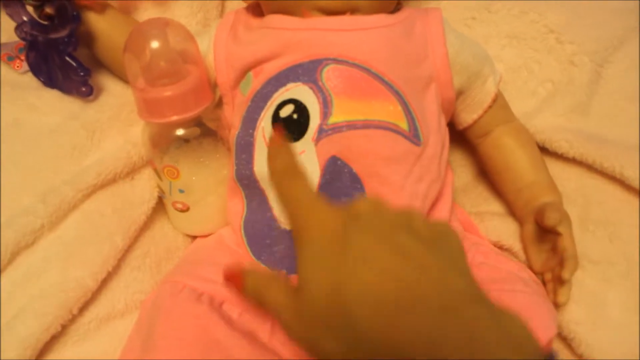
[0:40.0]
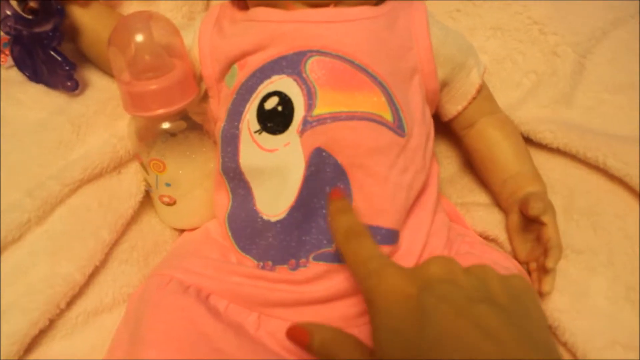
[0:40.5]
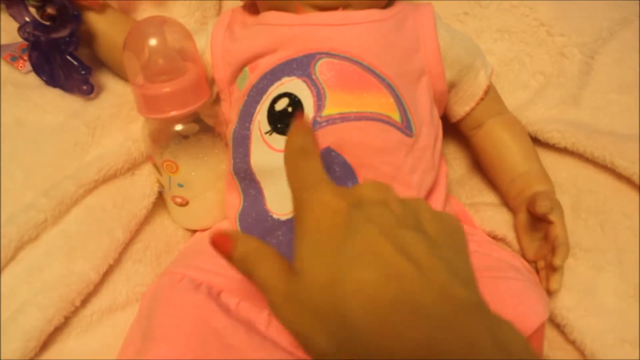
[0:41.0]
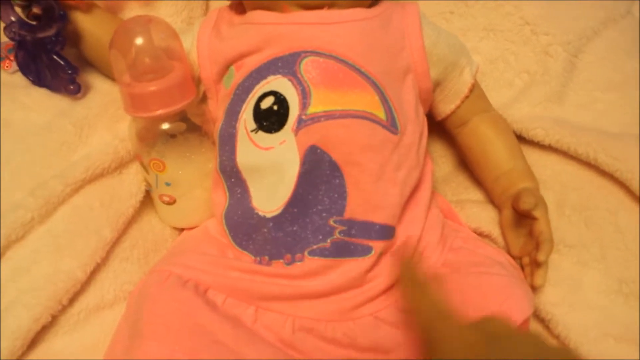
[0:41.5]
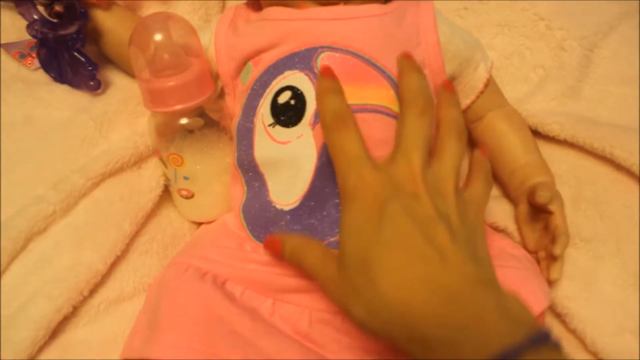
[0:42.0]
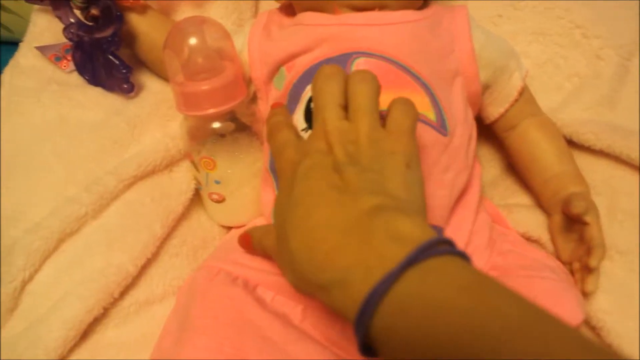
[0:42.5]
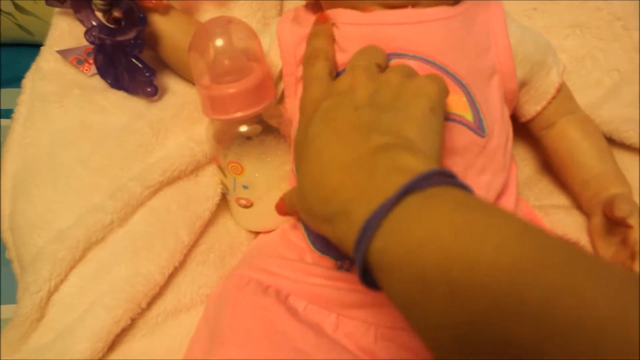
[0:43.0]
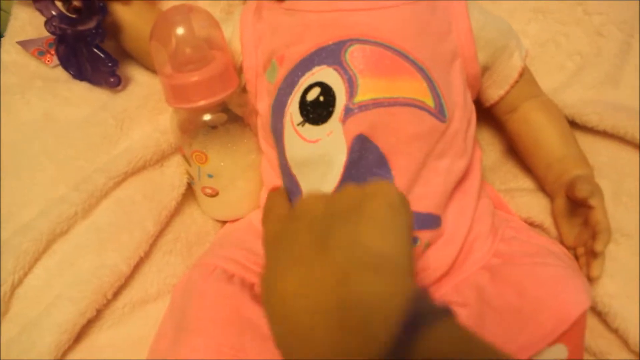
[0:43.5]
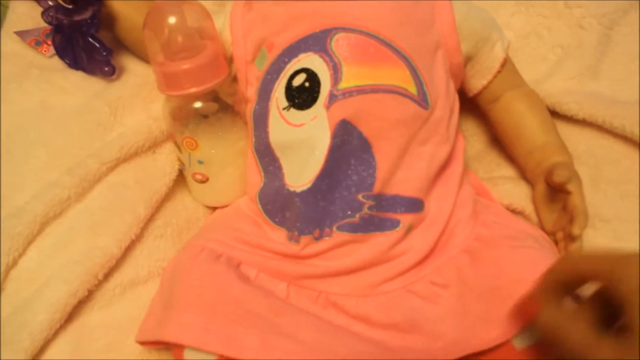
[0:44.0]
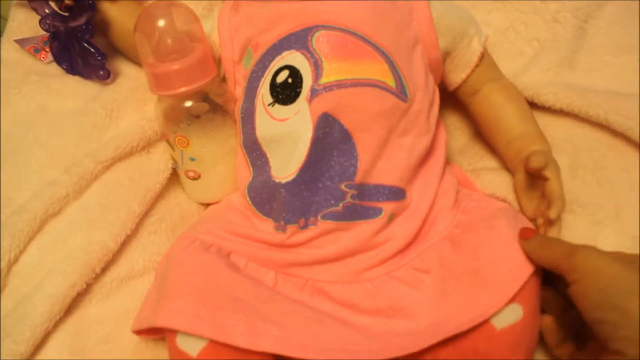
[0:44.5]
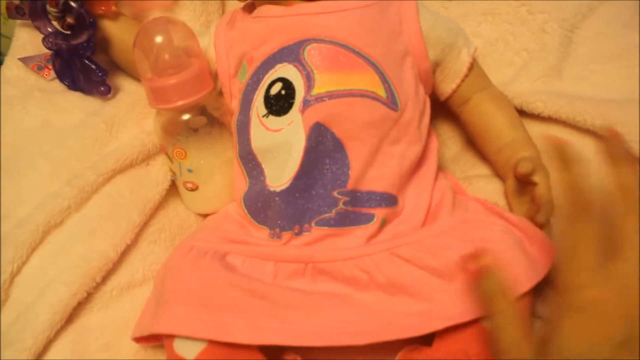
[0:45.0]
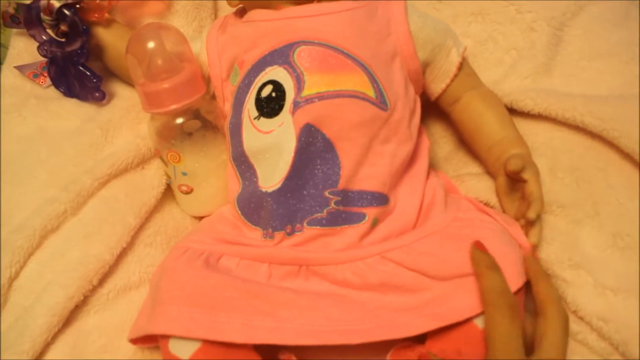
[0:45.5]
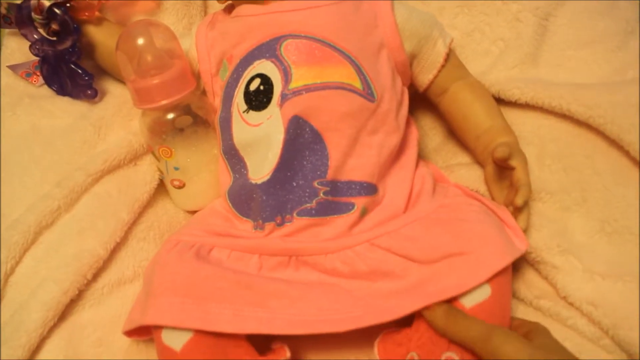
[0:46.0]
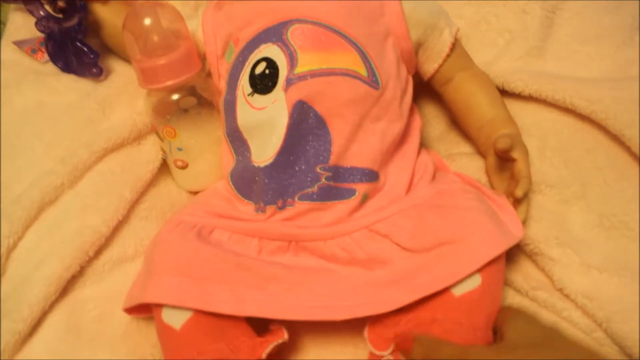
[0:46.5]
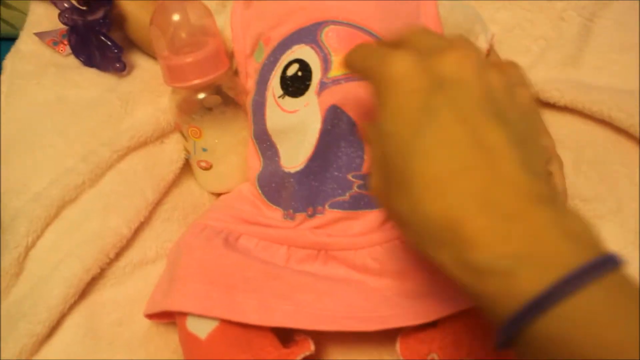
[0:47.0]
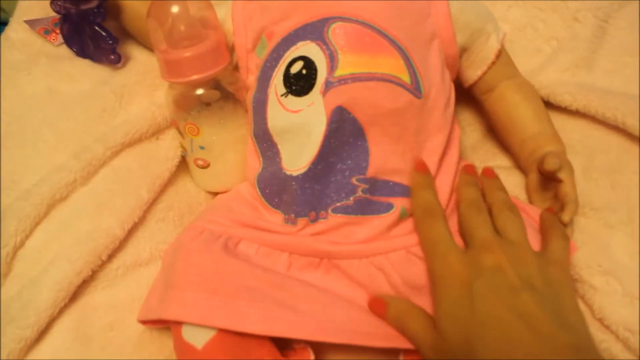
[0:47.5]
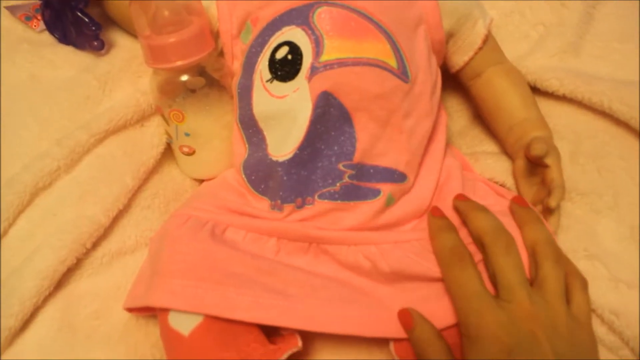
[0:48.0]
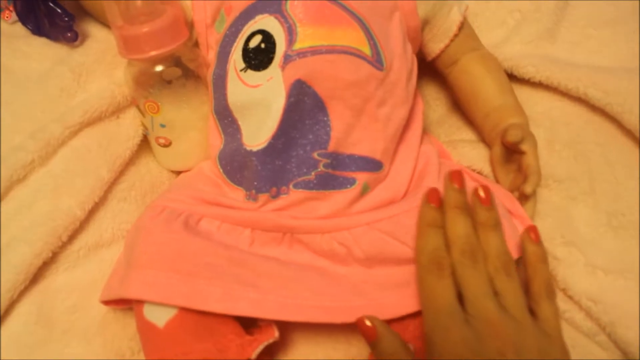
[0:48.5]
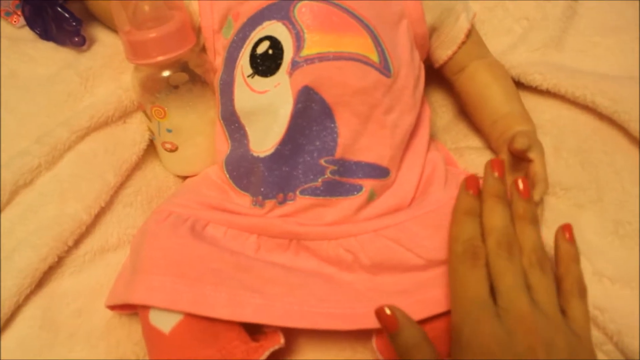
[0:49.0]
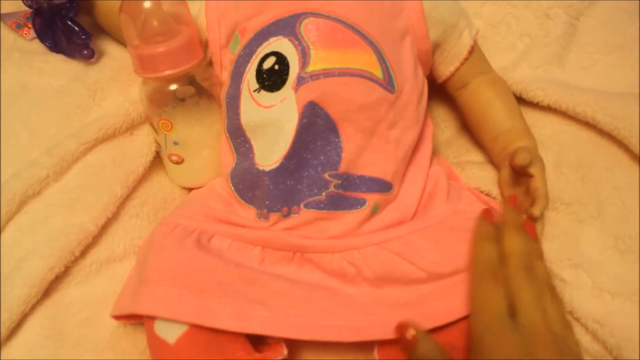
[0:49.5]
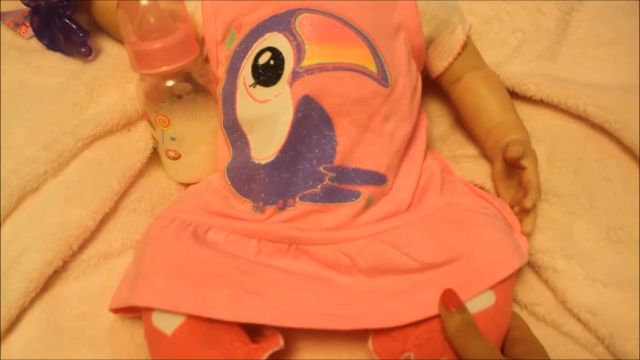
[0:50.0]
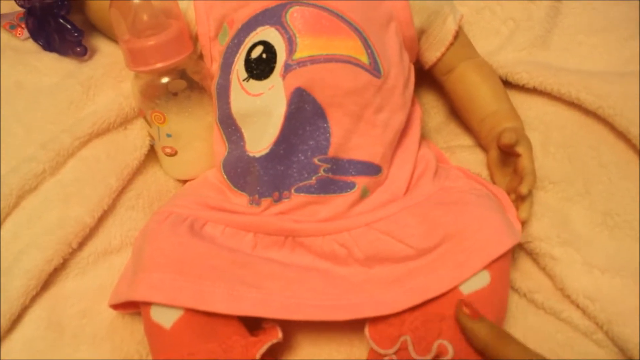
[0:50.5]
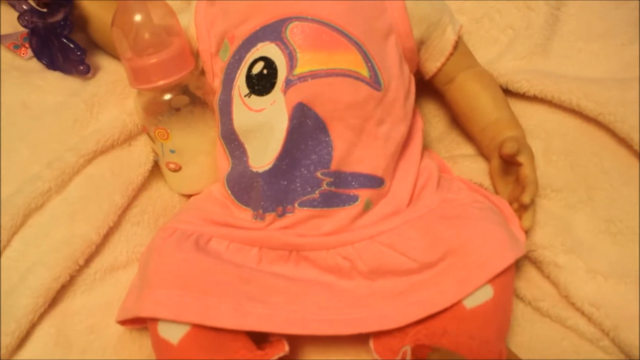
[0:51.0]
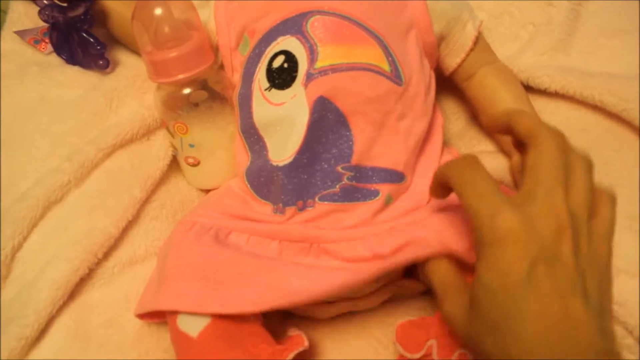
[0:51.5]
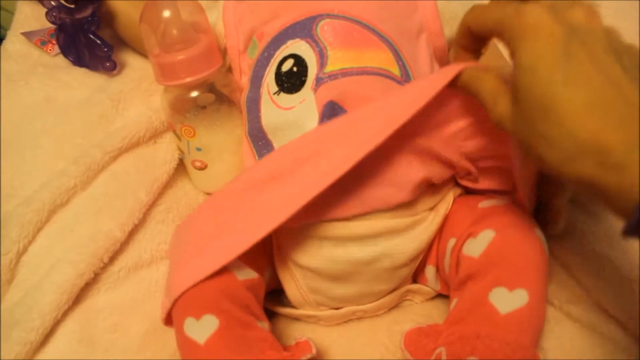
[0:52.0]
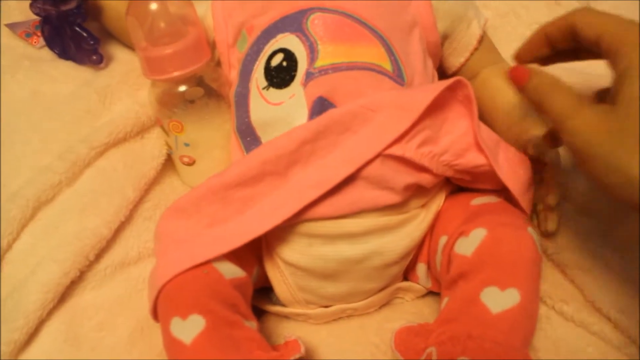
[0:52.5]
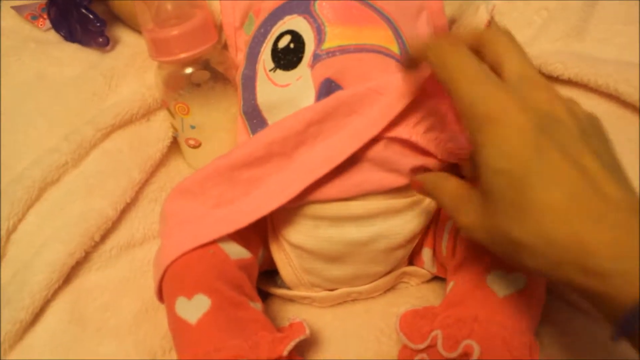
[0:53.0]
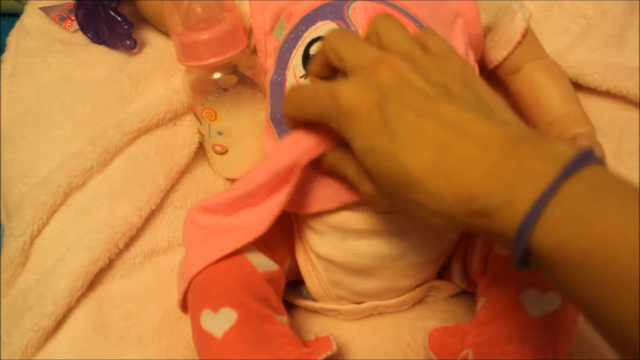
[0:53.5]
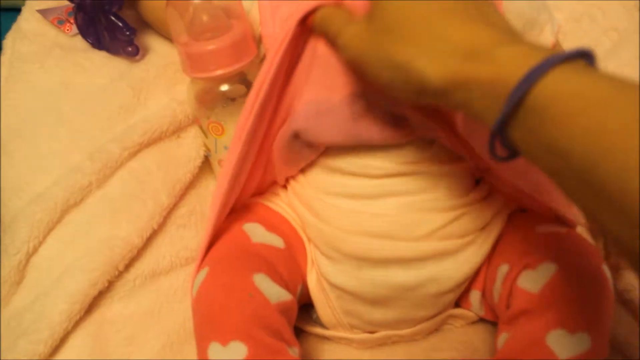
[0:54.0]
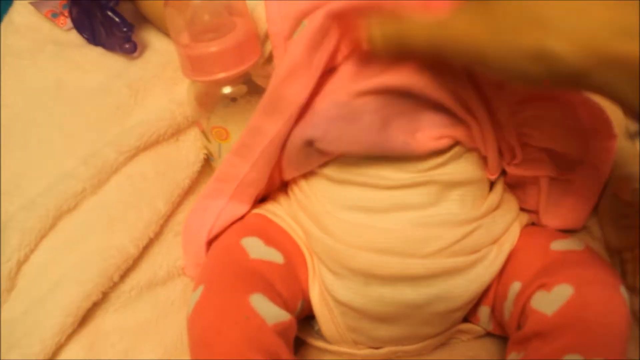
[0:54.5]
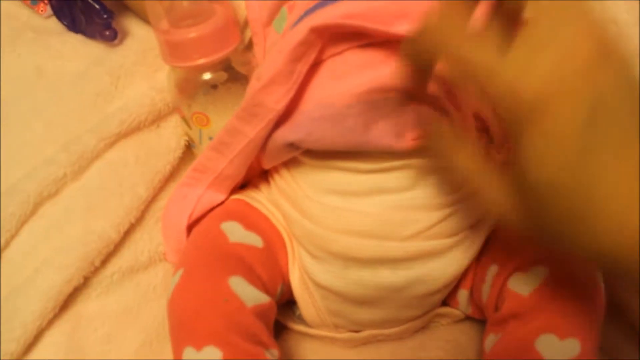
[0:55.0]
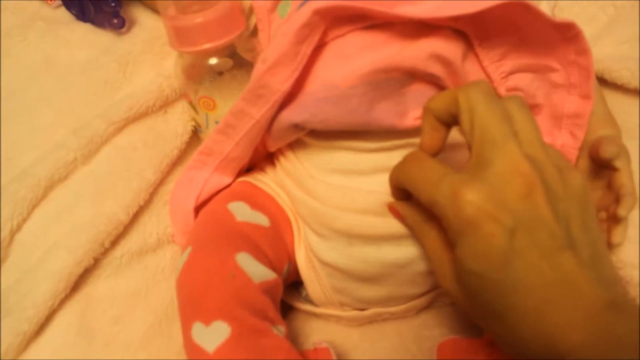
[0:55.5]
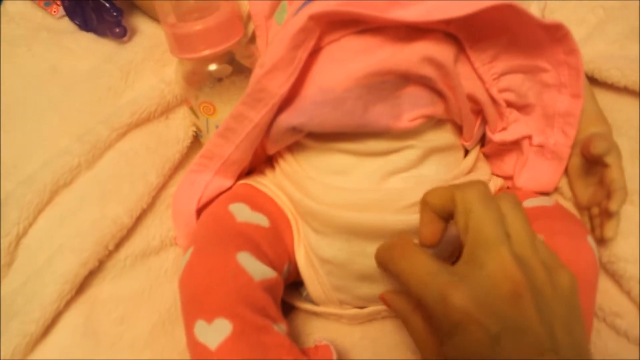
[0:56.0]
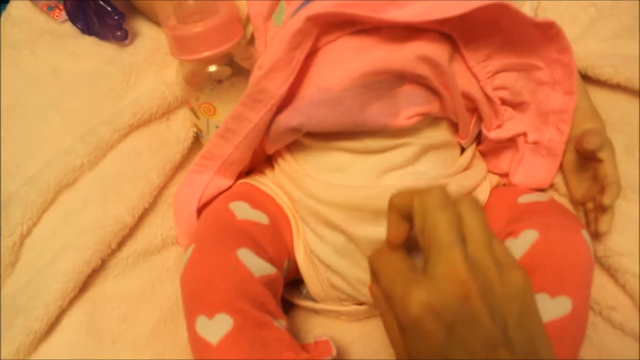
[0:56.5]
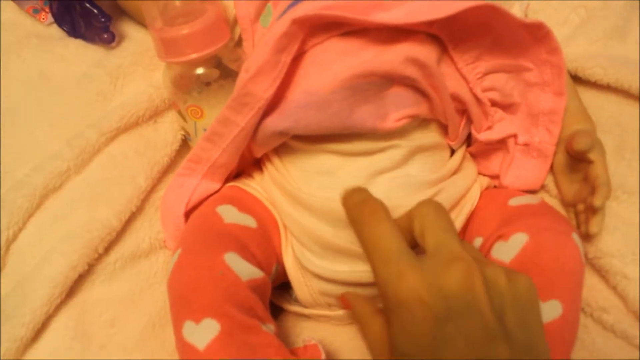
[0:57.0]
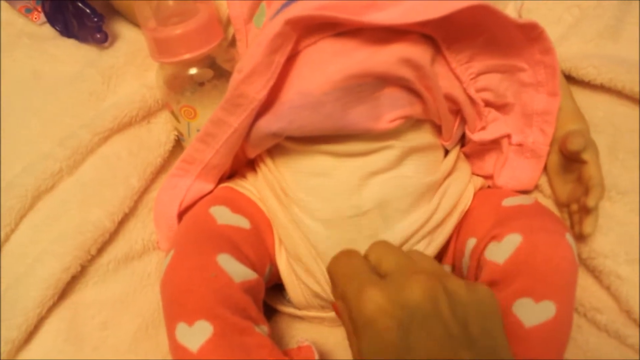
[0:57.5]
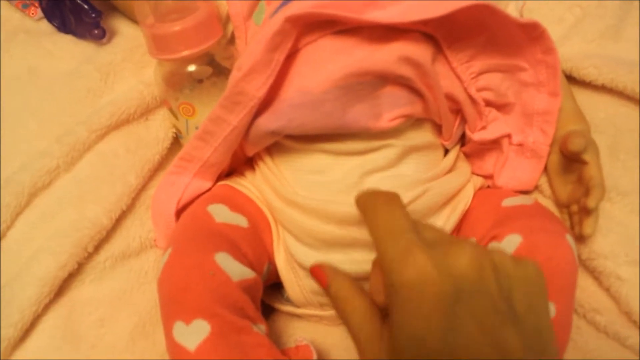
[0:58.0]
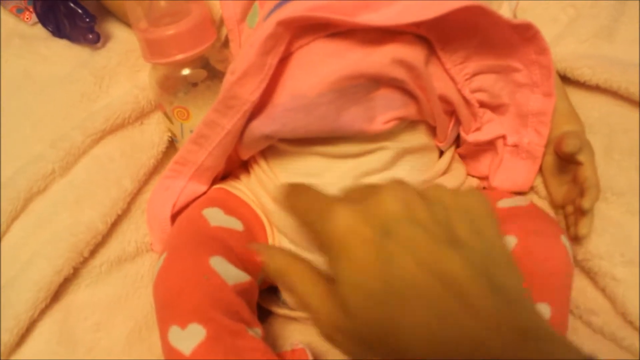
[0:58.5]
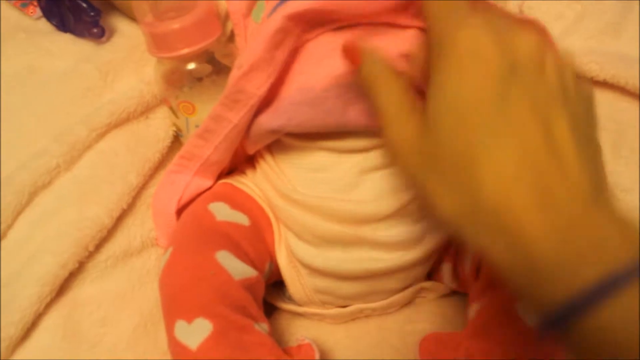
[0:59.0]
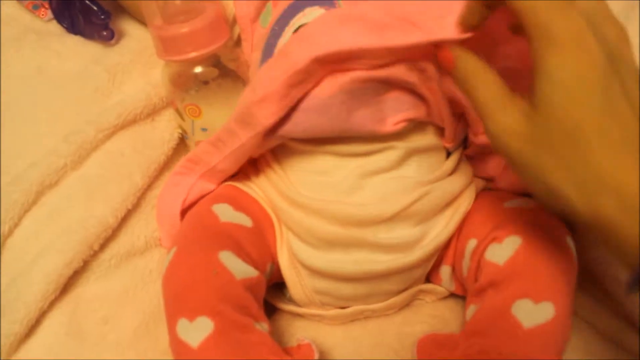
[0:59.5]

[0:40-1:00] The host, who is also holding the camera, goes over the baby doll's clothes with their hand, feeling the dress and the logo on it, which is of a purple zombie girl. They lift up the dress to show a white undershirt, go over its material with their hand, and pull the dress back down. The doll also has on pink socks and shoes, and a glass of milk is to the side of it. The person keeps pulling at the clothes, seemingly to show the materials. They have pink fingernails.